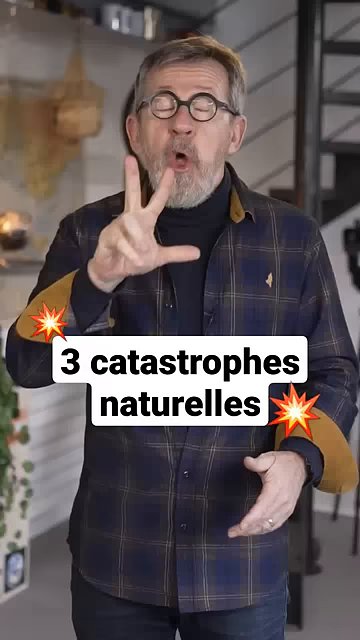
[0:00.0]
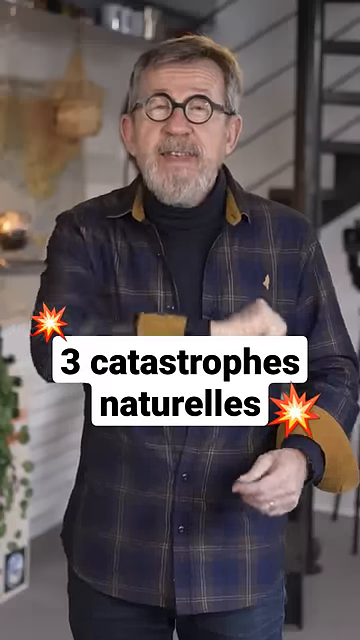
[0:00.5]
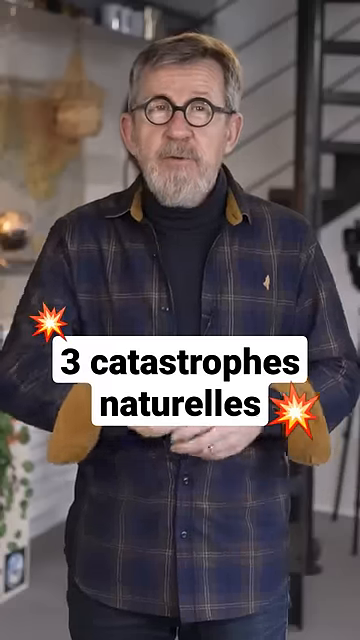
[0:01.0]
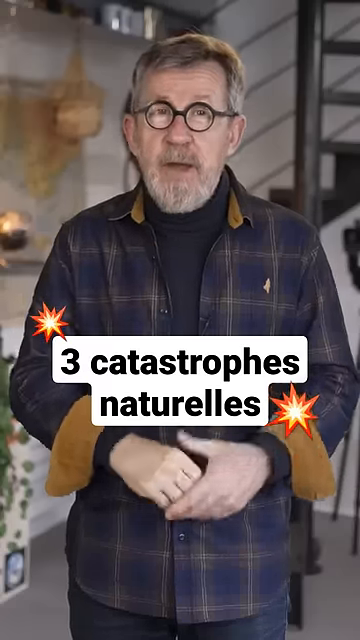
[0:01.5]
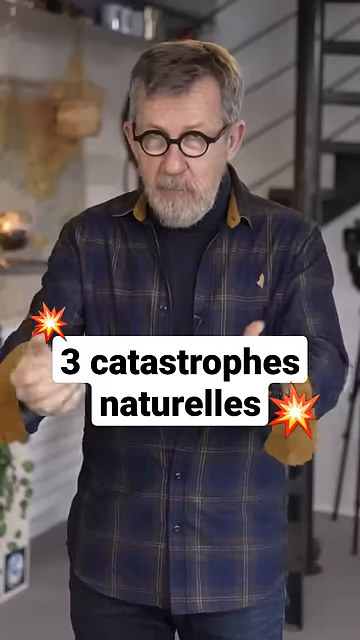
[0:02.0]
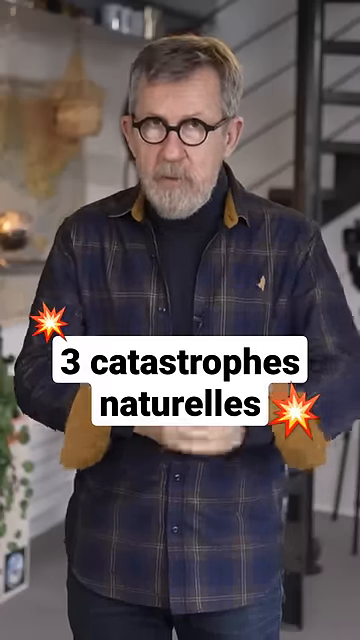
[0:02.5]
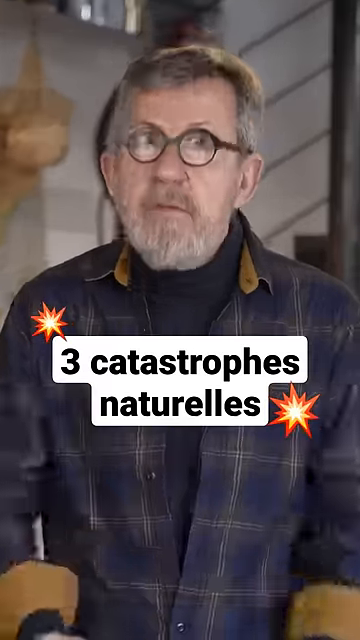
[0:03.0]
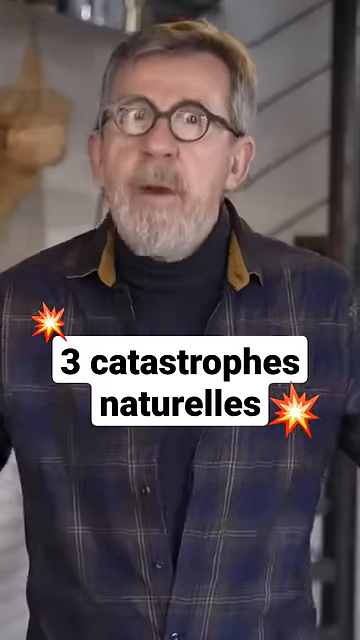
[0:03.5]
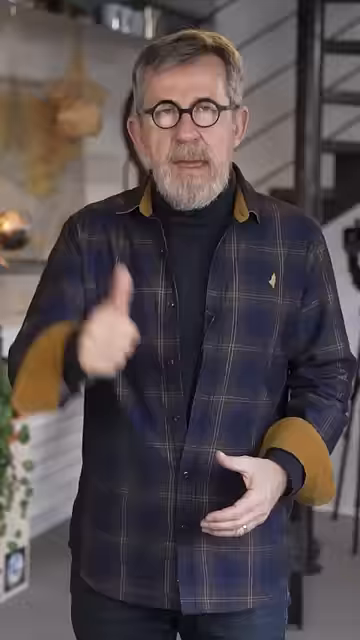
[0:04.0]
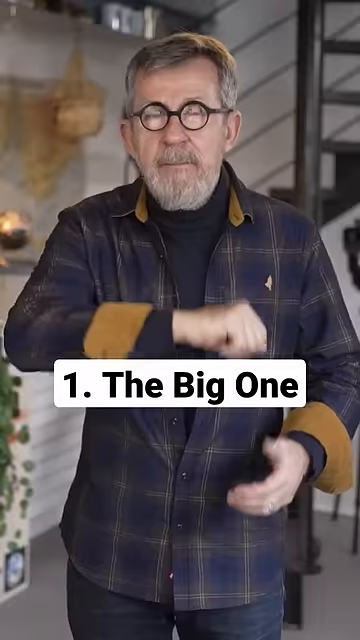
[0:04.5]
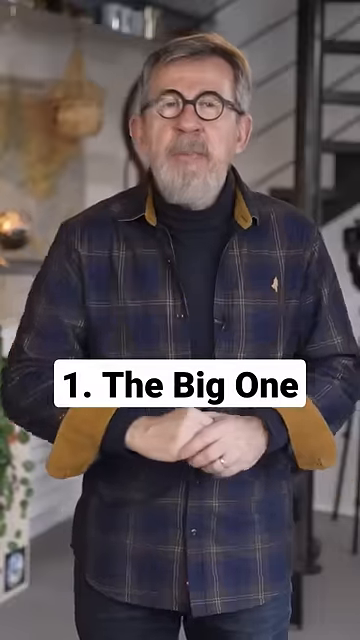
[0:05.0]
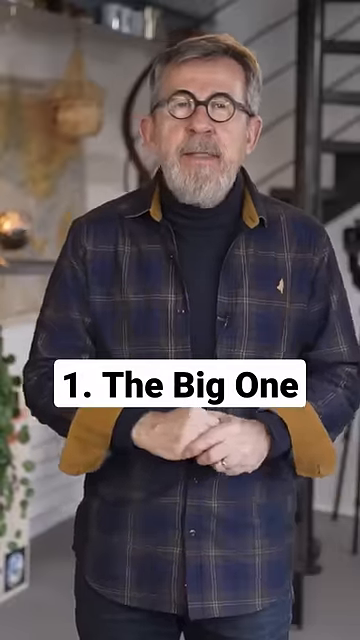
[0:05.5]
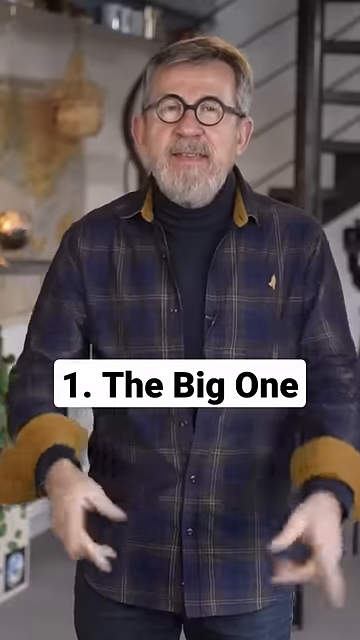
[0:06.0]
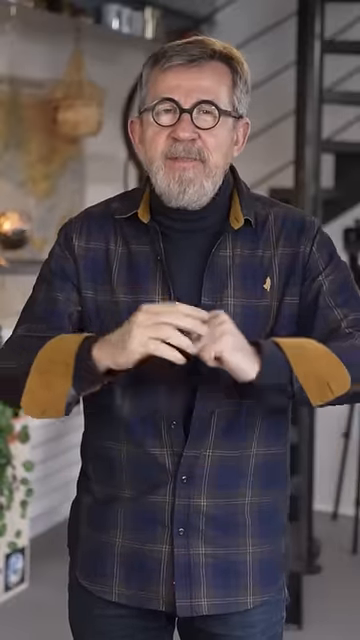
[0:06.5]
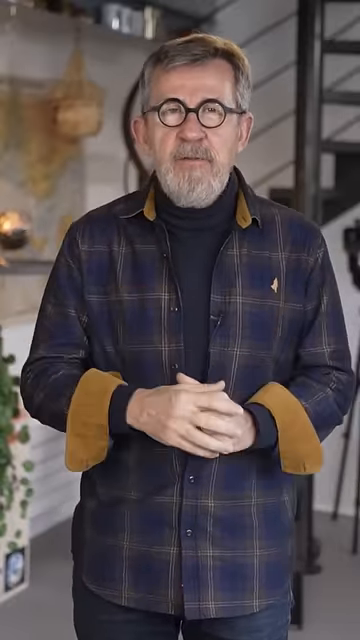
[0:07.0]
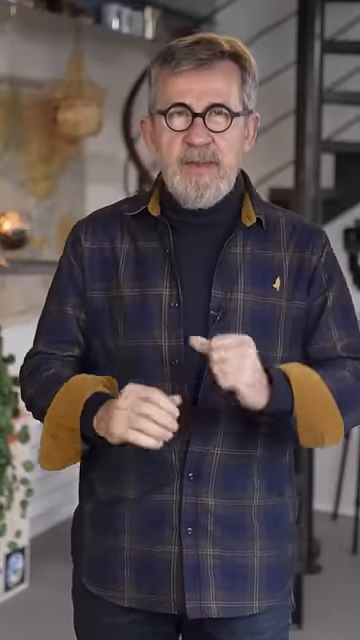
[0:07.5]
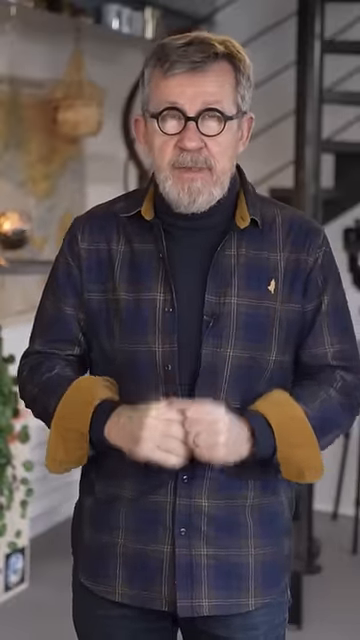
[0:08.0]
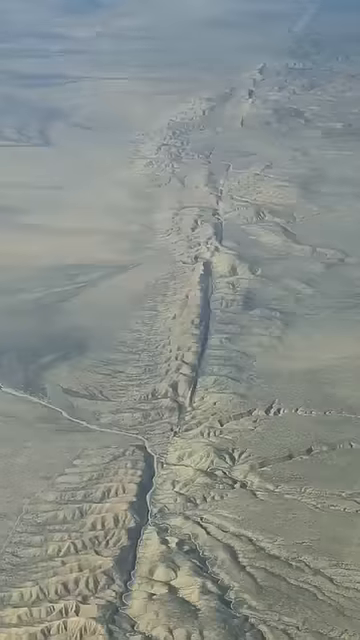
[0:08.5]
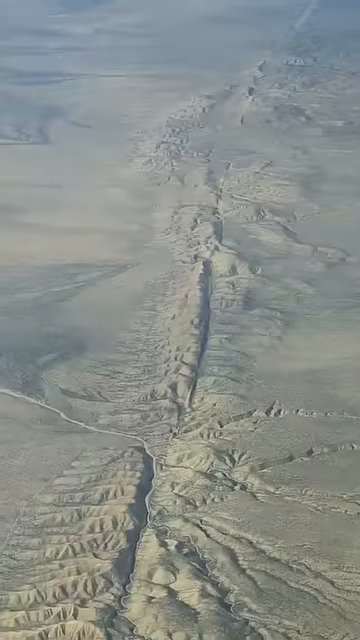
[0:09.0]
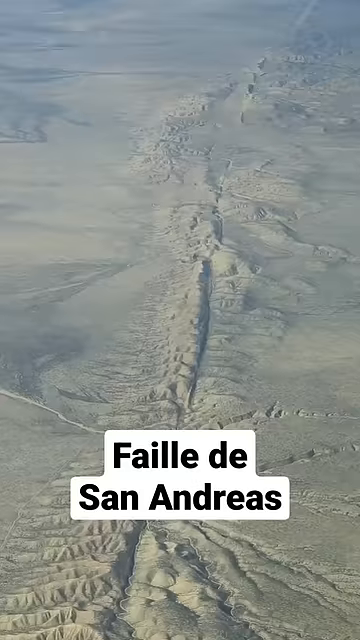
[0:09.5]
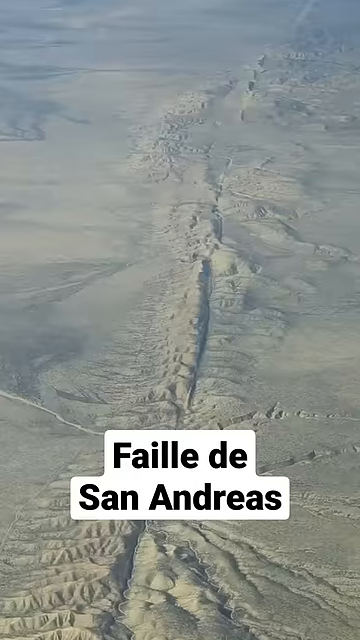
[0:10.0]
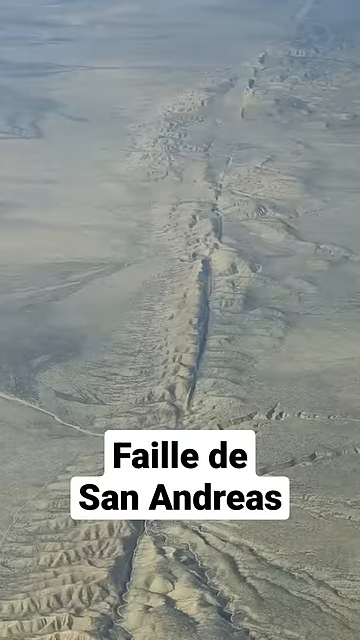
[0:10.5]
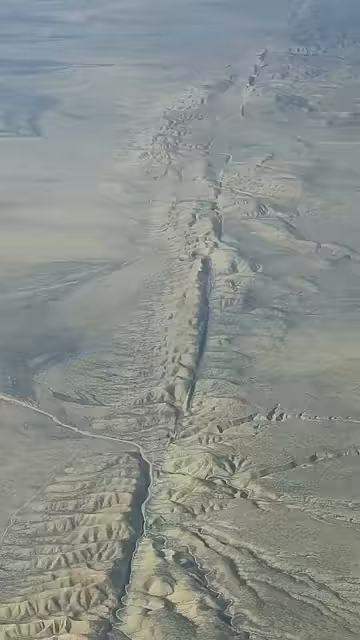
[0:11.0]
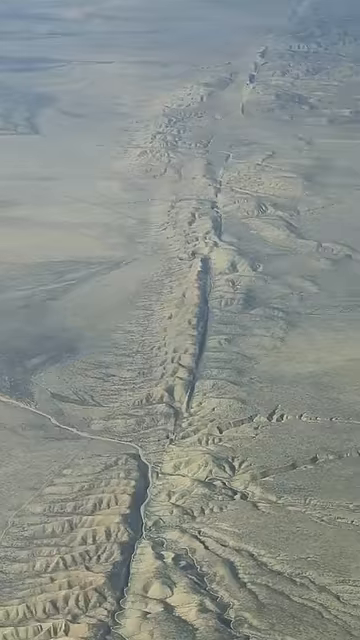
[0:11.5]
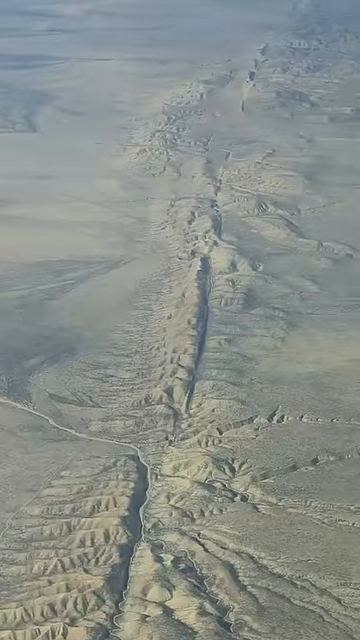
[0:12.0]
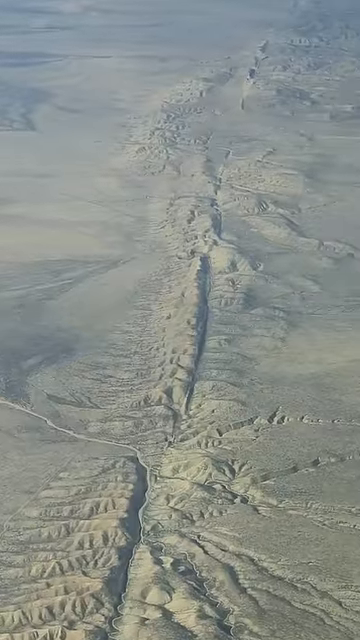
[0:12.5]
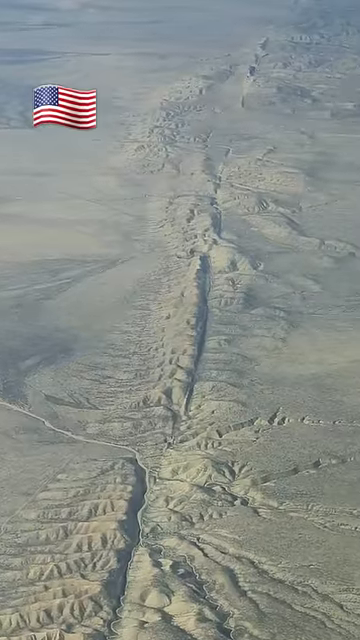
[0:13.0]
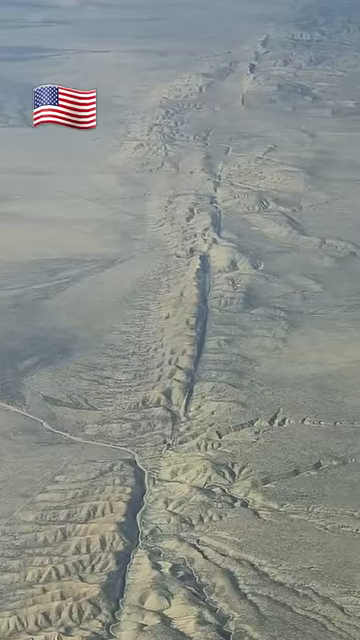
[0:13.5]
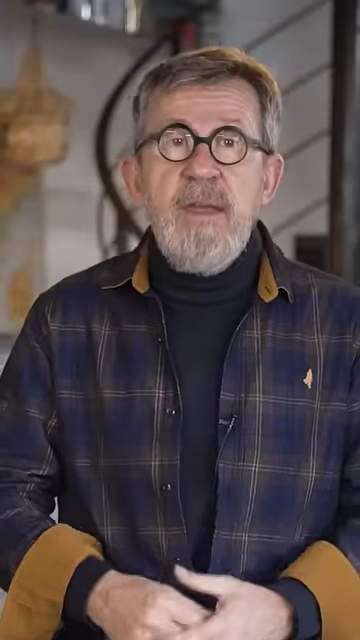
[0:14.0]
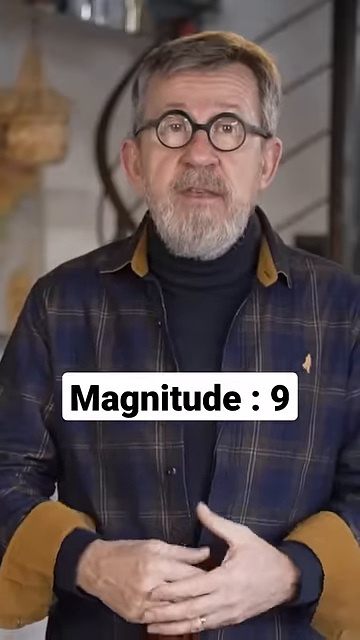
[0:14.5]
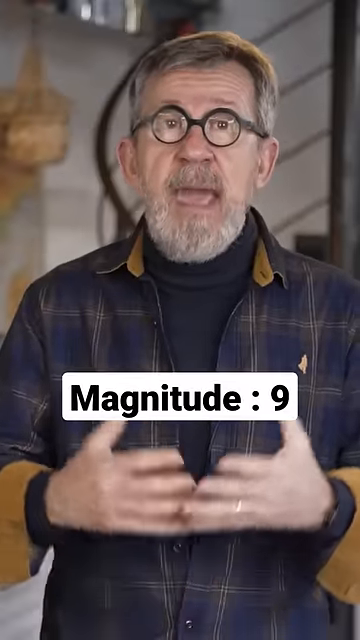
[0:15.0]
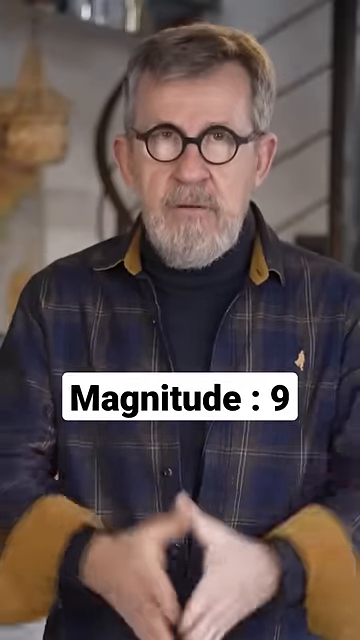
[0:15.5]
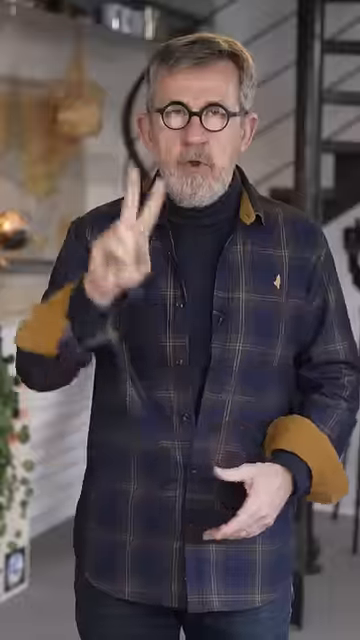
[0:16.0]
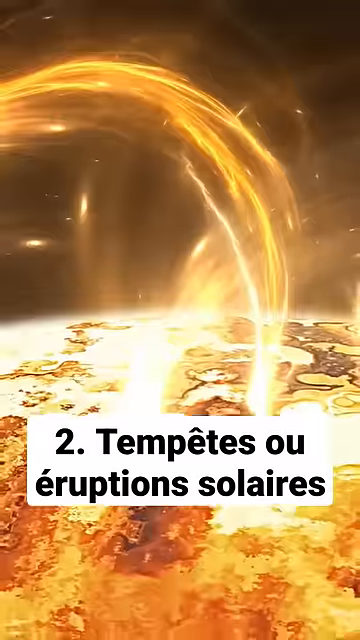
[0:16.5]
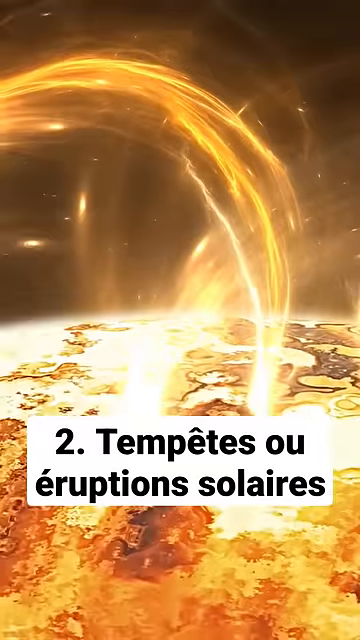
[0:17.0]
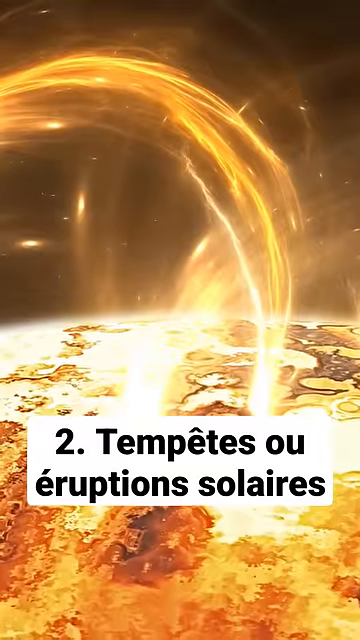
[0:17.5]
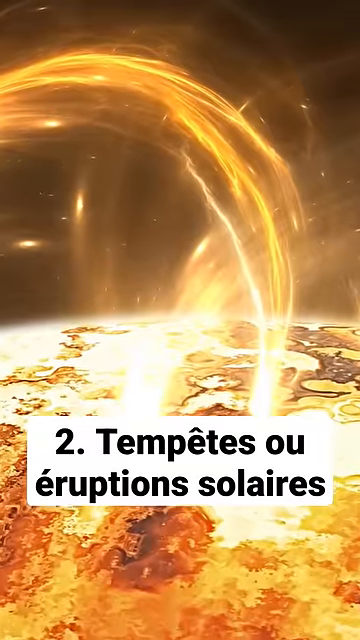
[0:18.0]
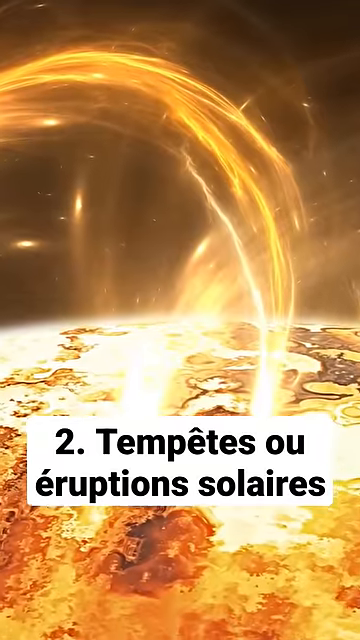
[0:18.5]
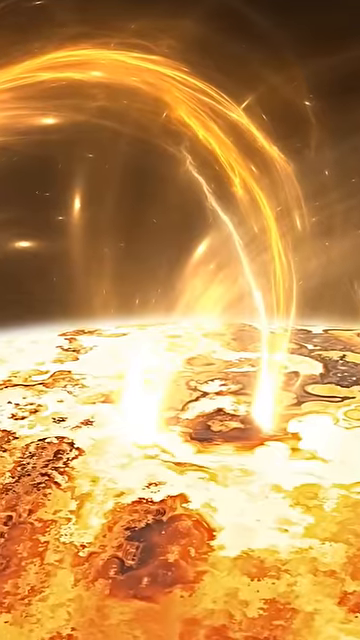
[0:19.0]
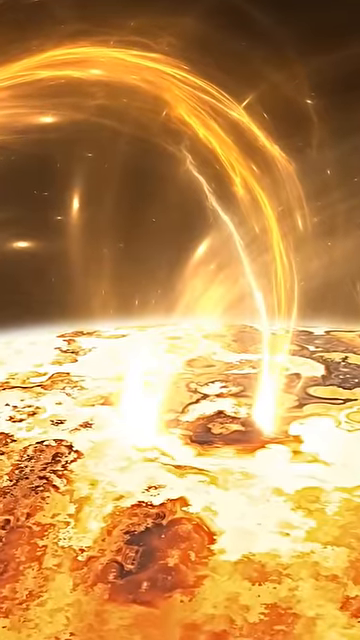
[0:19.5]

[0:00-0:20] A single man talks to the camera, very energetic, using his hands to communicate. He looks like a relatively smart individual. The video flashes to what is apparently the San Andreas Fault, and then to a visual representation of what could be happening inside the Earth, with magma and plate tectonics.